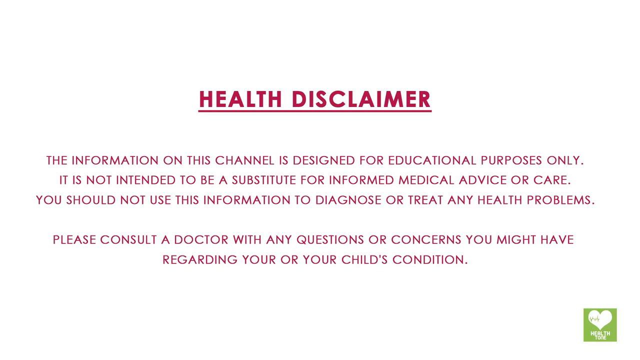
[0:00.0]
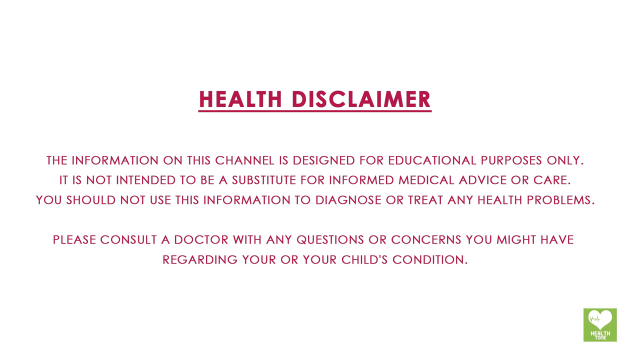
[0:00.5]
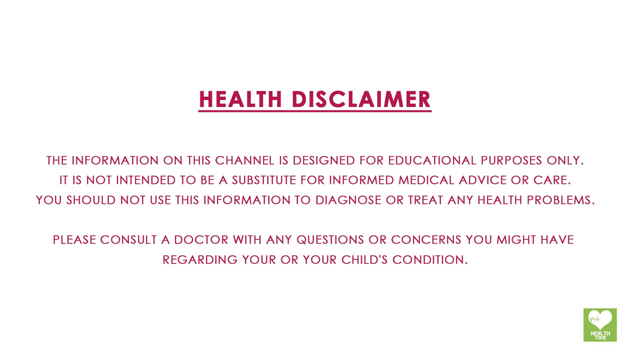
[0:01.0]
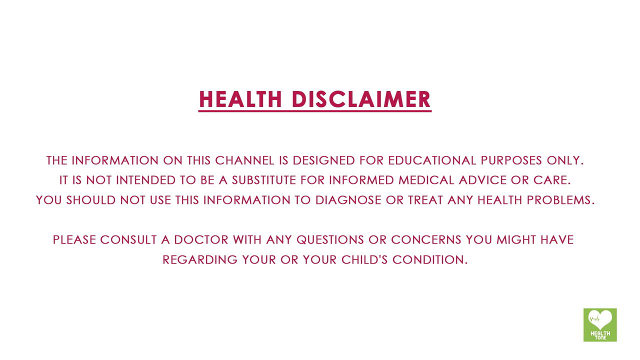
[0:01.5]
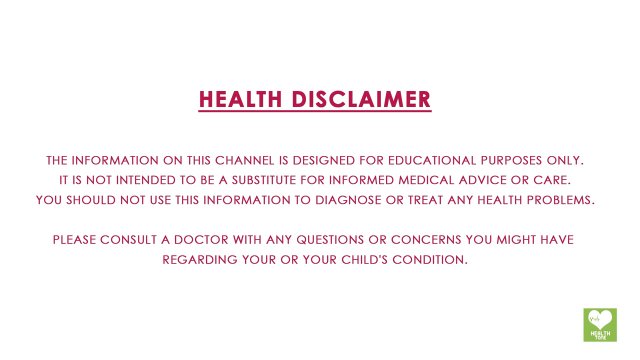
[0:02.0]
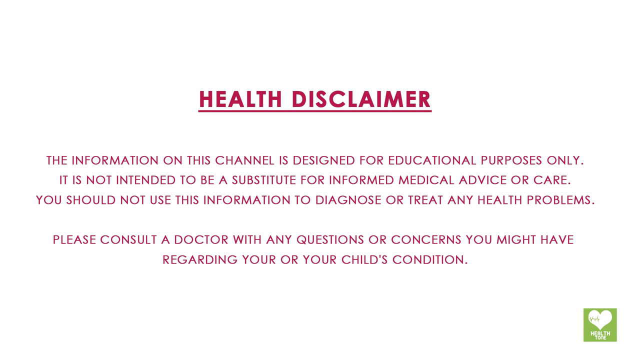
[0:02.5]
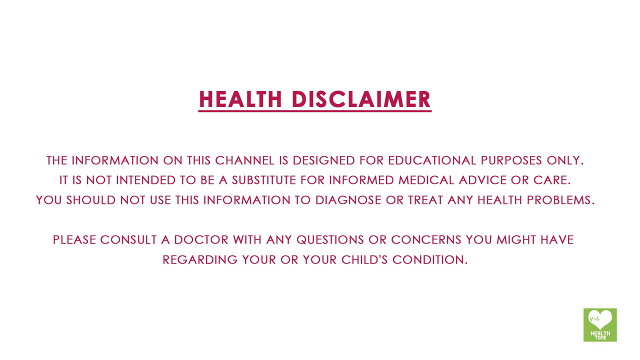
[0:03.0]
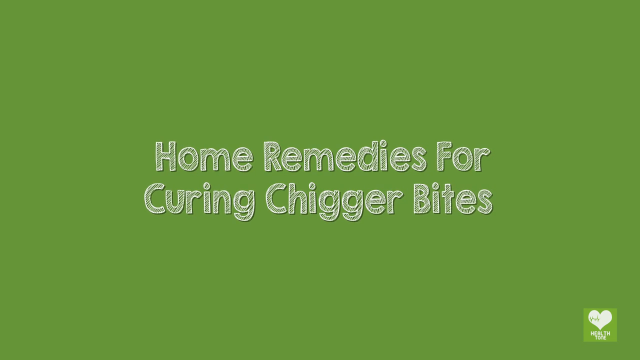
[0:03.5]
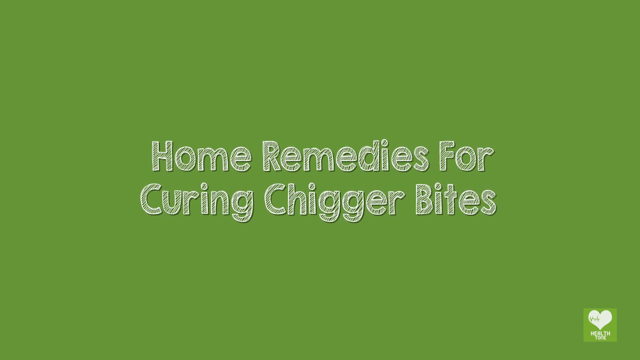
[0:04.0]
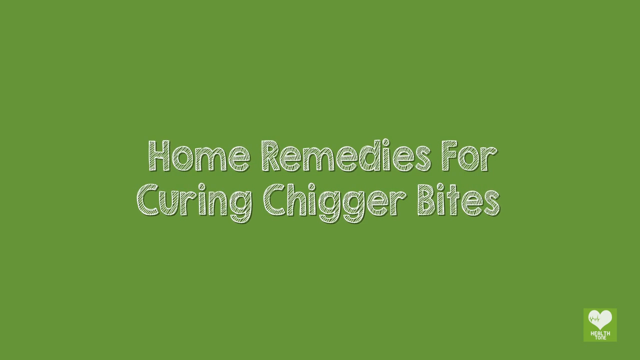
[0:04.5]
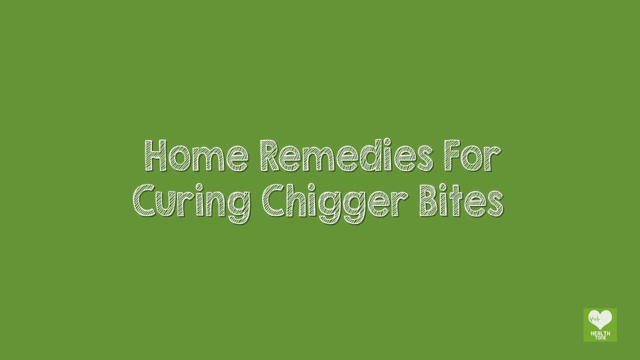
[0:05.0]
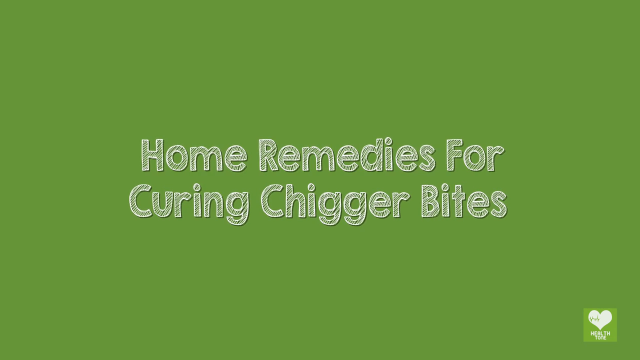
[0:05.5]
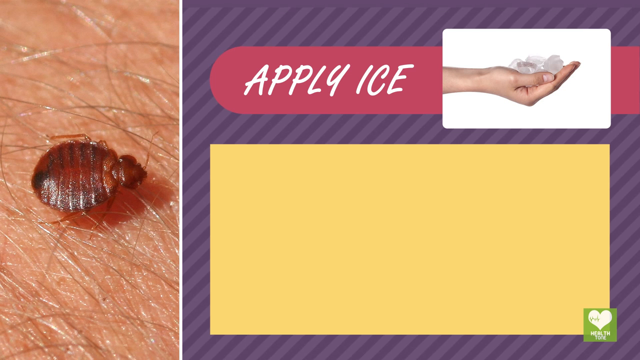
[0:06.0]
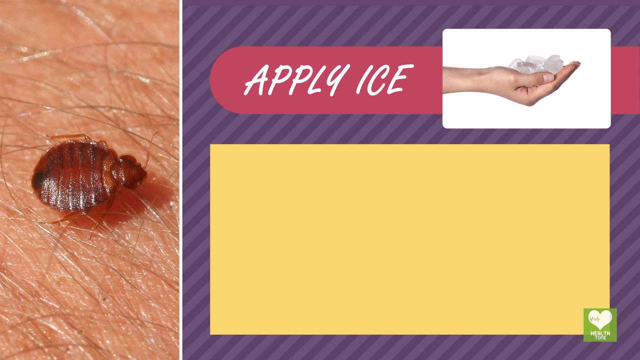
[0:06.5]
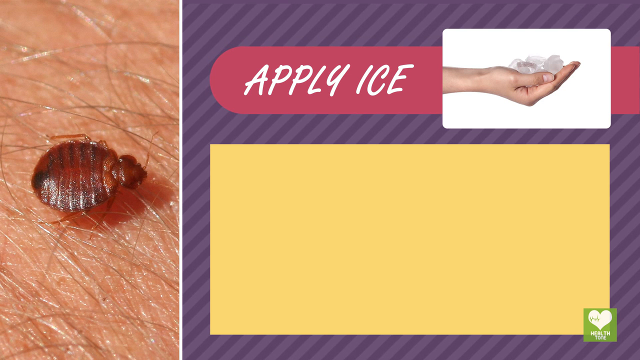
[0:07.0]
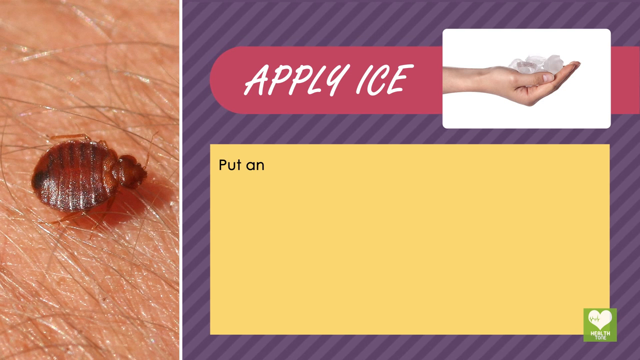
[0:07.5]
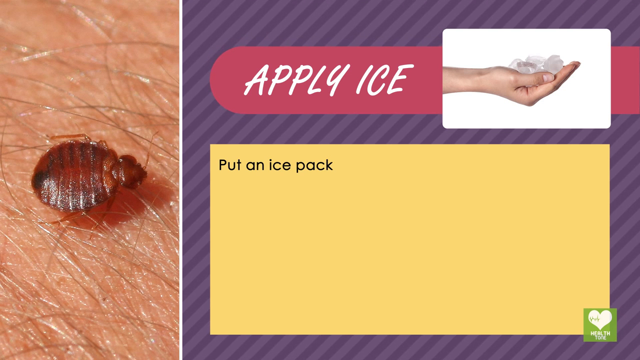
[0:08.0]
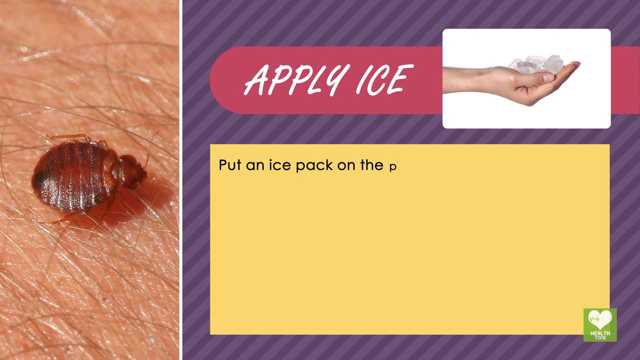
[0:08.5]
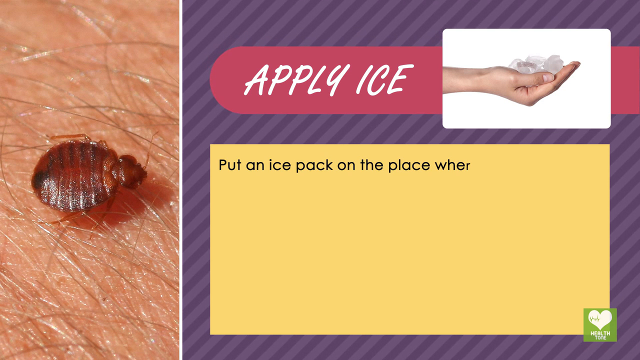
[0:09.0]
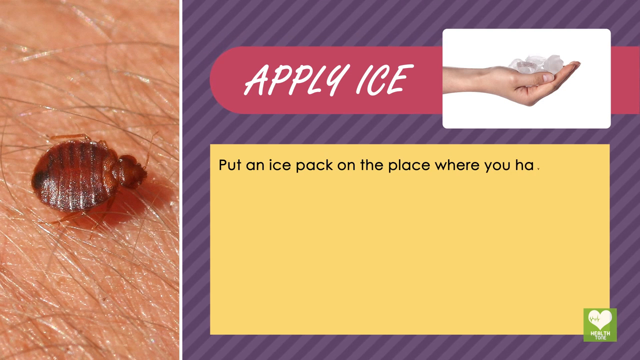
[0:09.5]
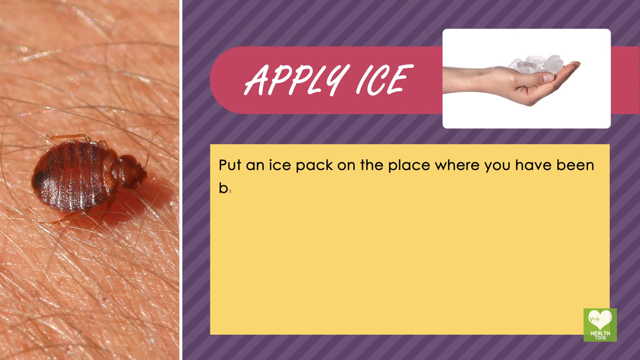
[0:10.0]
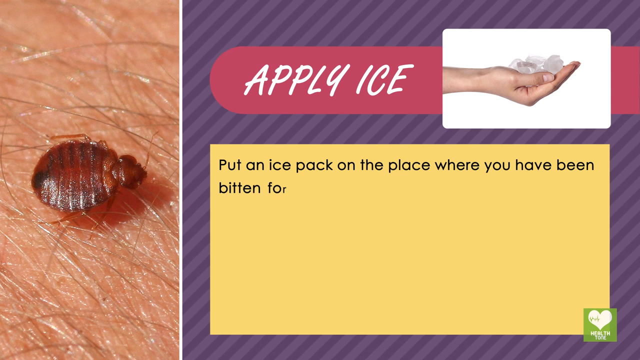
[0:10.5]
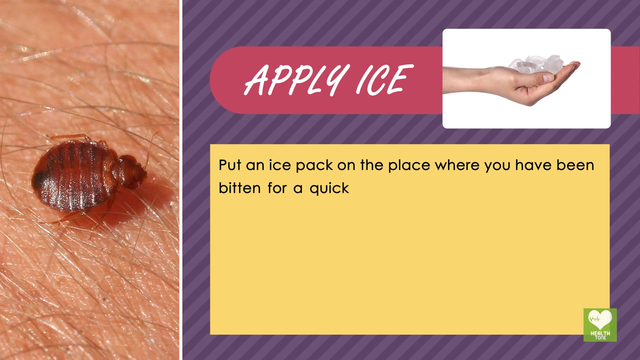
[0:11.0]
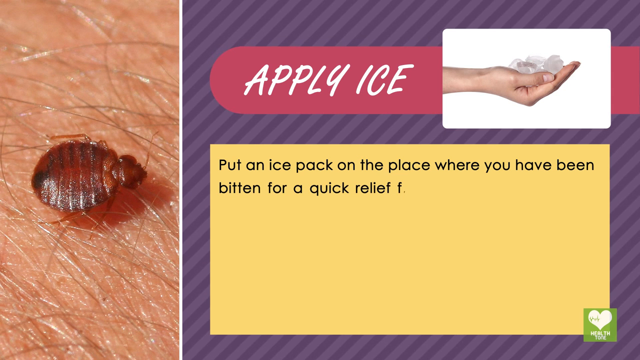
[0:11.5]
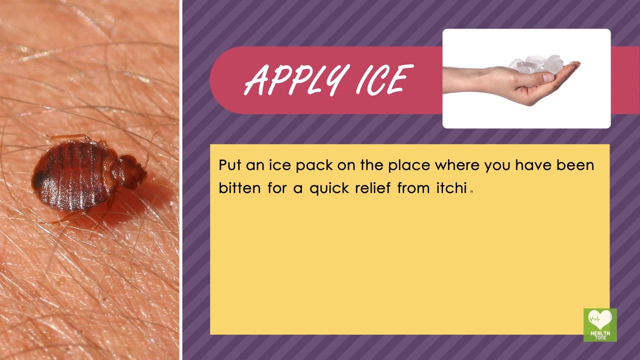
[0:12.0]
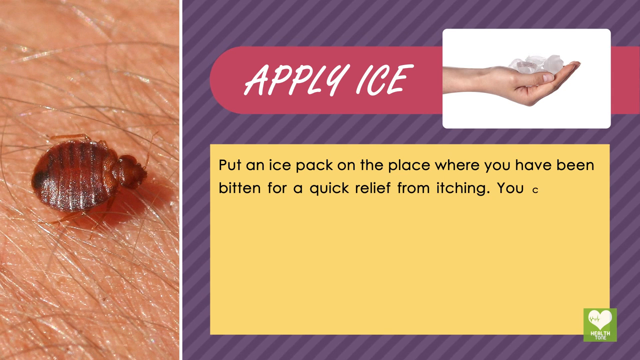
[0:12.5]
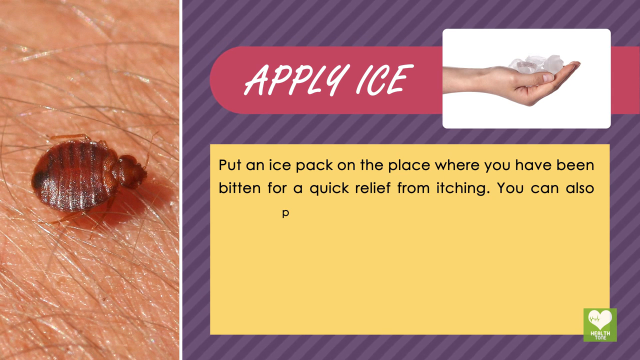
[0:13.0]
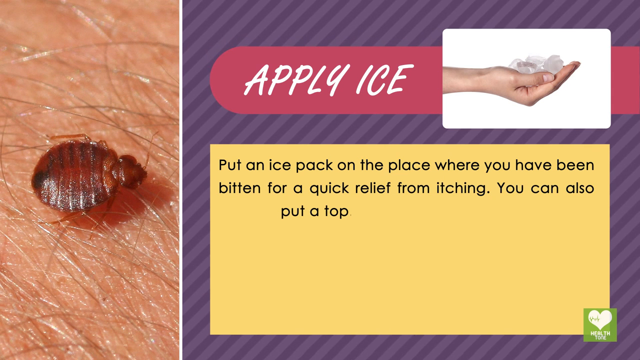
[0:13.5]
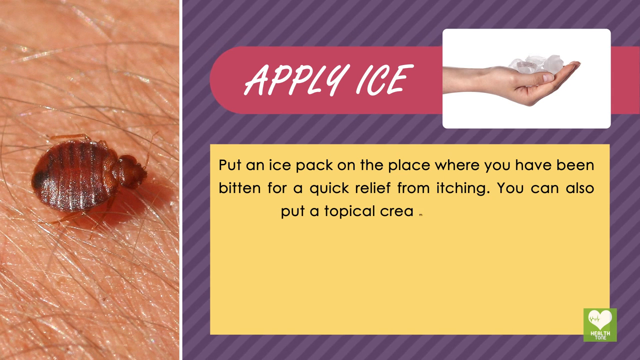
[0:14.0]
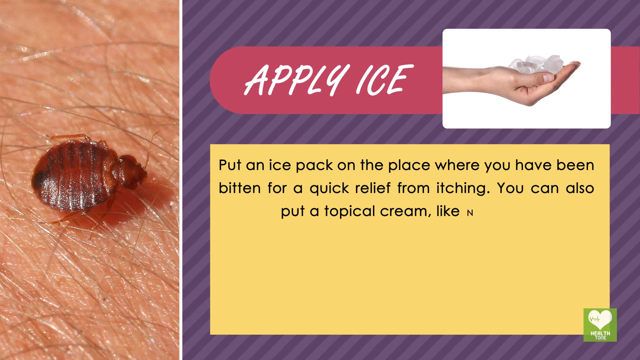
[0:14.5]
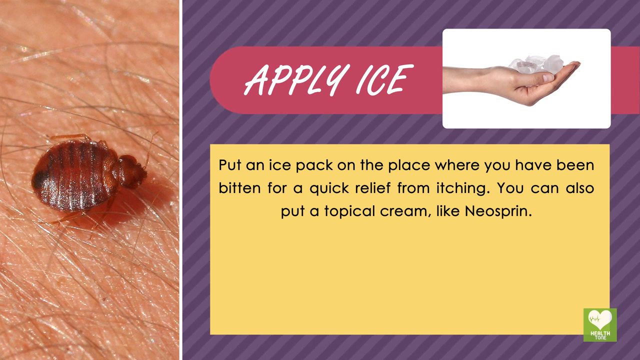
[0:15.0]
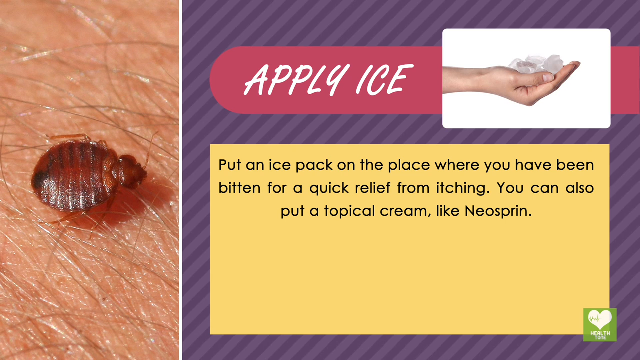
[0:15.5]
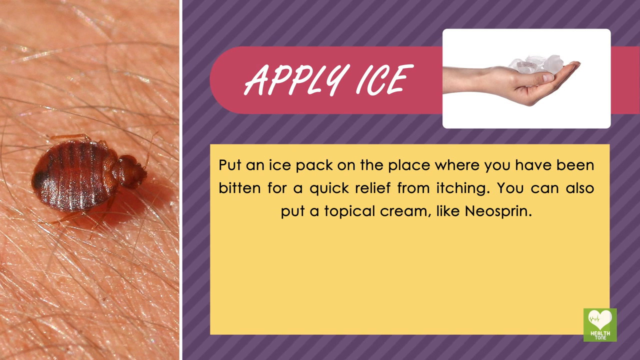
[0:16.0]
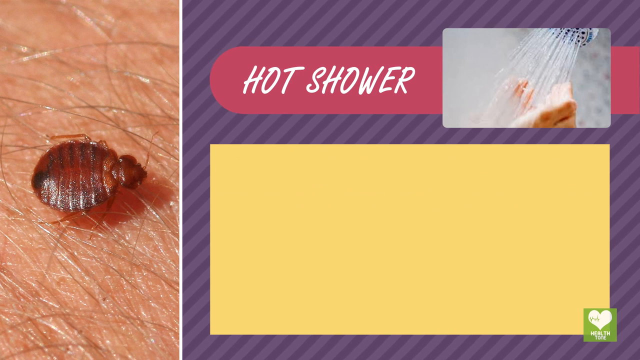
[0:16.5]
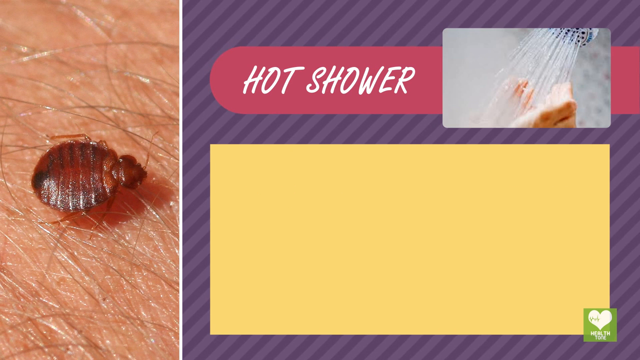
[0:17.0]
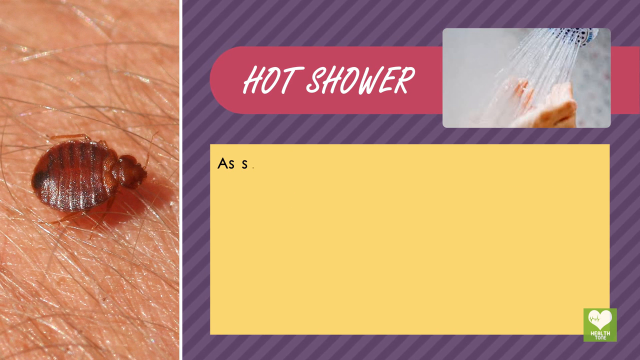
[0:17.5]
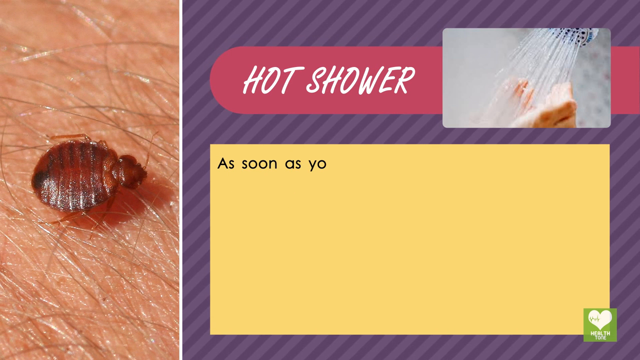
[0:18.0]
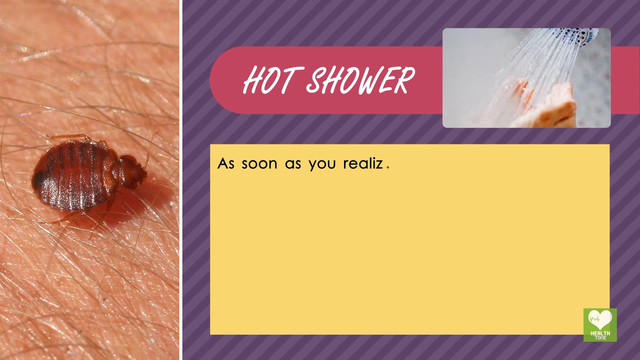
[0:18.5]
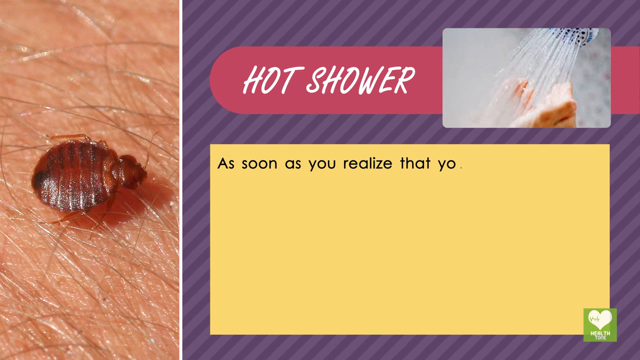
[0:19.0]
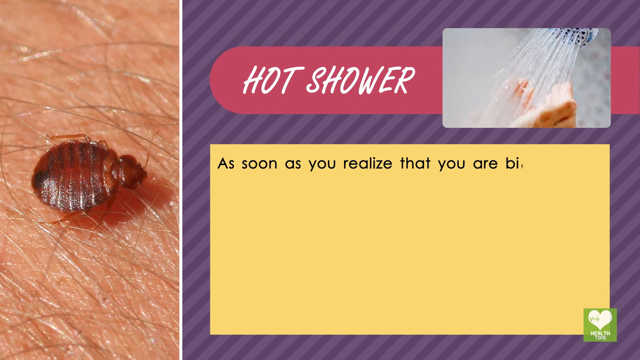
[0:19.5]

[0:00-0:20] A screen shows the headline "HEALTH DISCLAIMER" in all capital letters, centered on the page in a bold, underlined sans-serif font. Below it are two paragraphs in the same sans-serif font, smaller and lighter in weight. The first paragraph has three lines: "THE INFORMATION ON THIS CHANNEL IS DESIGNED FOR EDUCATIONAL PURPOSES ONLY." "IT IS NOT INTENDED TO BE A SUBSTITUTE FOR INFORMED MEDICAL ADVICE OR CARE." "YOU SHOULD NOT USE THIS INFORMATION TO DIAGNOSE OR TREAT ANY HEALTH PROBLEMS." The second paragraph has two lines: "PLEASE CONSULT A DOCTOR WITH ANY QUESTIONS OR CONCERNS YOU MIGHT HAVE" continuing to "REGARDING YOUR OR YOUR CHILD'S CONDITION." In the bottom right-hand corner is a light green square with a heart in the middle, which looks like a logo. Next comes a light green screen with the text "home remedies for curing chigger bites" in a white handwritten font, almost like a child's. Another light green screen follows with the text "home remedies for curing chigger bites" in a bold outlined handwritten font. The next screen has two distinct parts. The first quarter of the screen holds a close-up photo of a chigger bug on a person's arm; the hairs on the arm are visible, and the chigger bug is sitting on top of the skin. To the right of the image is a purple background with alternating light and dark purple stripes running from bottom left to top right. On top of the striped background is a maroon/magenta headline box containing headline text and an image. The headline text is in a white, all-caps handwritten font. The first remedy headline reads "APPLY ICE," and directly to its right is a photo of a hand holding ice cubes as if offering them to someone. Below the headline container is a yellow box, and below the yellow box, in the lower right-hand corner of the screen, is the green box with the heart logo. Black sans-serif instruction text begins to appear in the yellow box letter by letter, as if someone is typing it in real time: "put an ice pack on the place where you have been bitten for a quick relief from itching You can also put a topical cream like Neosporin." The screen then changes to the next remedy, hot shower. The picture of the chigger on the skin and the purple background remain the same; only the remedy has changed, and the image is now a picture of someone cupping their hands beneath a shower head. The text in the yellow box begins "as soon as you realize that you are bitten".